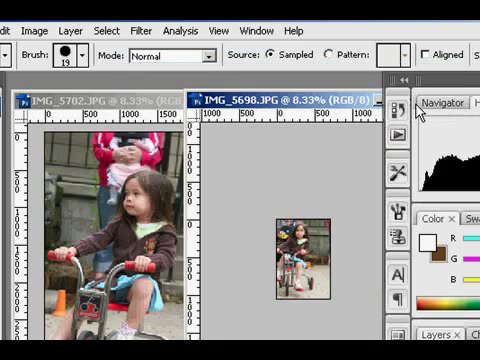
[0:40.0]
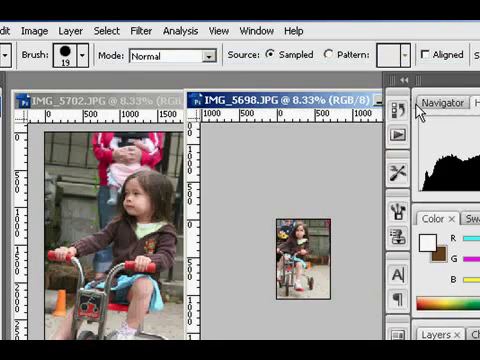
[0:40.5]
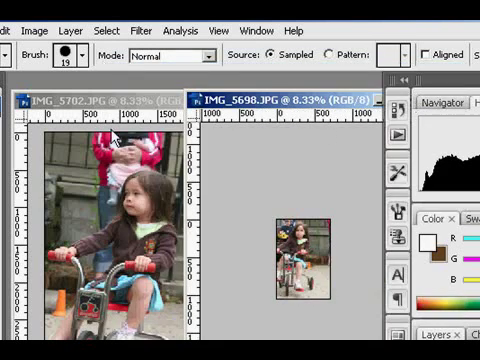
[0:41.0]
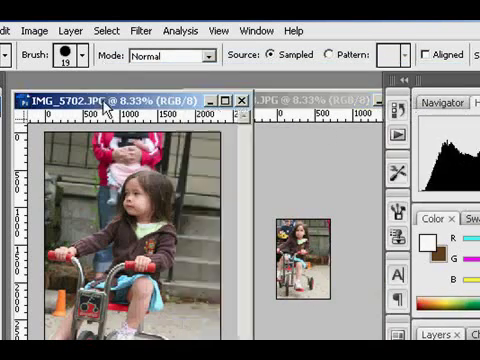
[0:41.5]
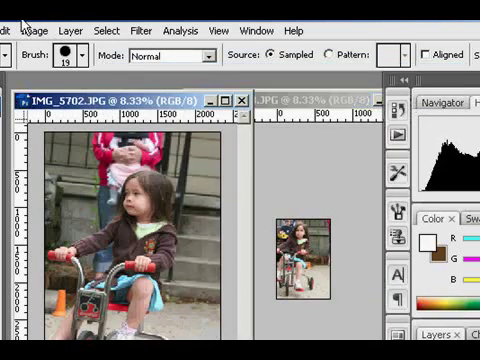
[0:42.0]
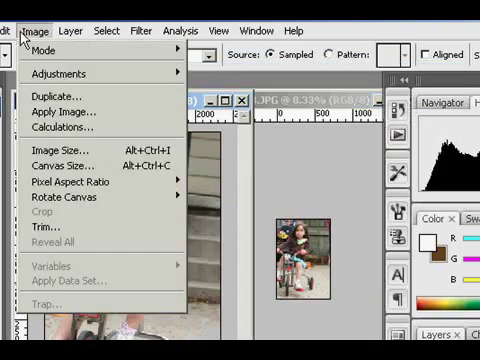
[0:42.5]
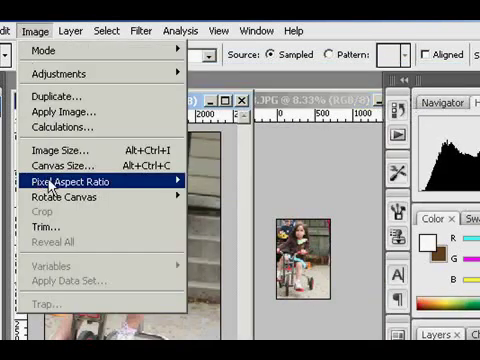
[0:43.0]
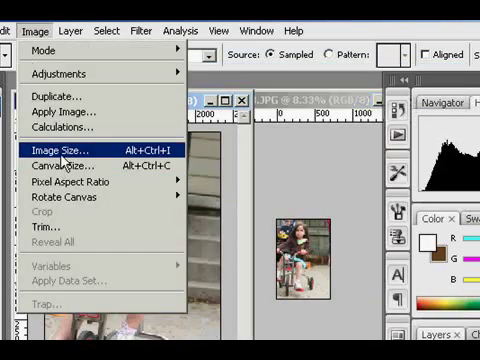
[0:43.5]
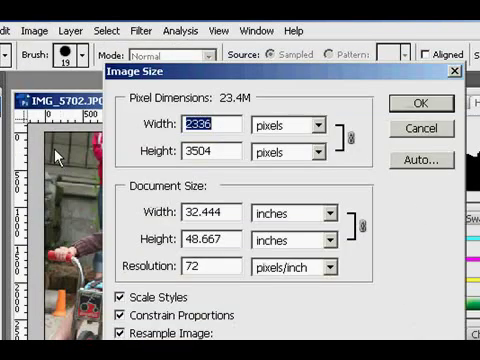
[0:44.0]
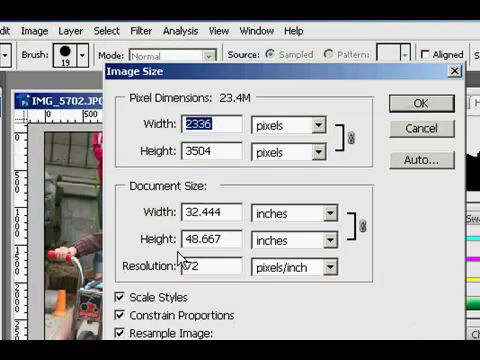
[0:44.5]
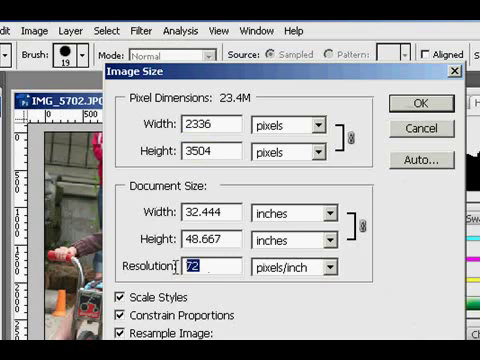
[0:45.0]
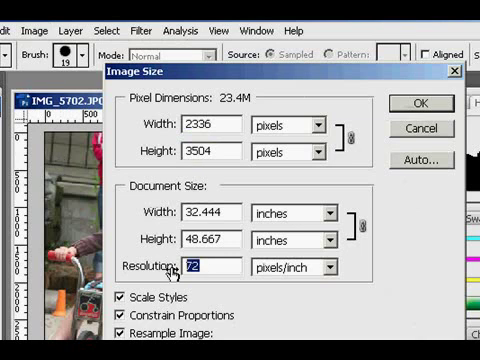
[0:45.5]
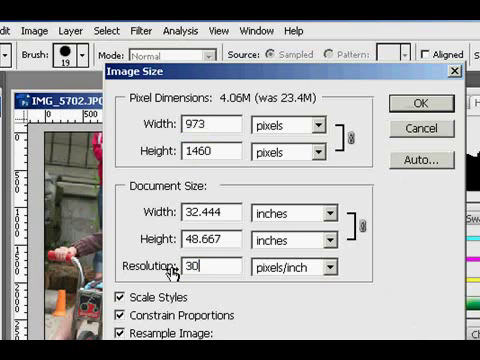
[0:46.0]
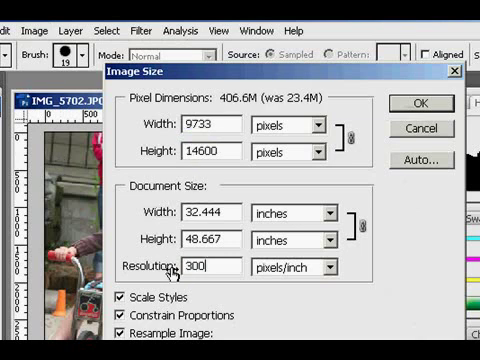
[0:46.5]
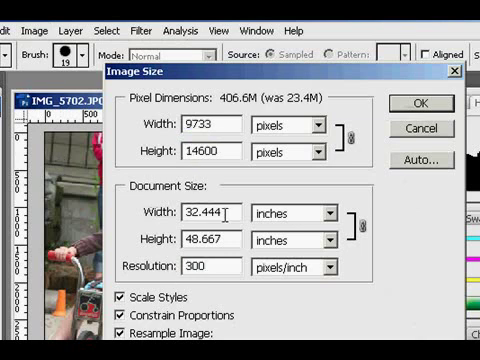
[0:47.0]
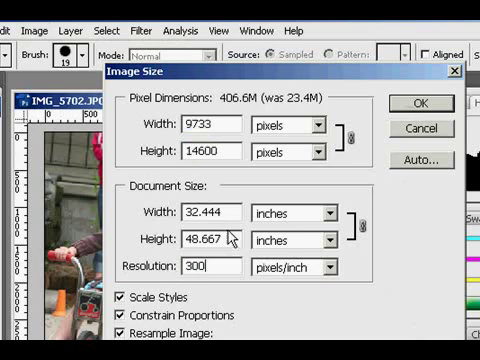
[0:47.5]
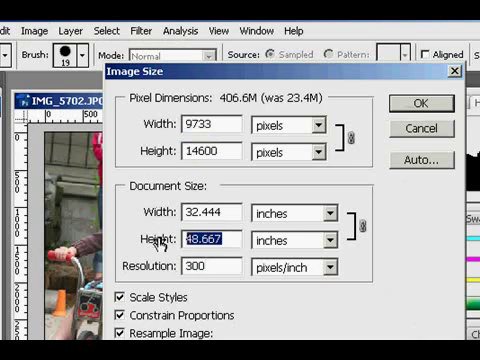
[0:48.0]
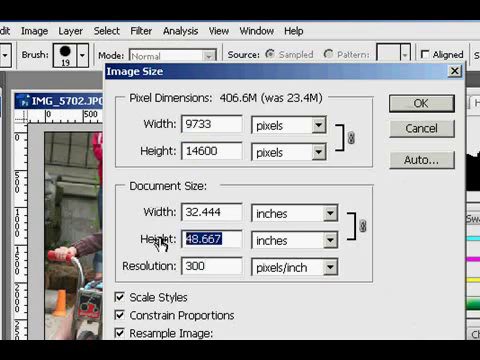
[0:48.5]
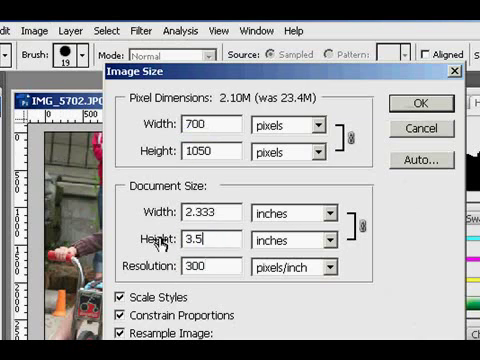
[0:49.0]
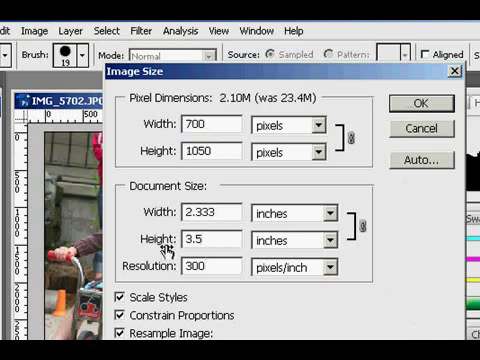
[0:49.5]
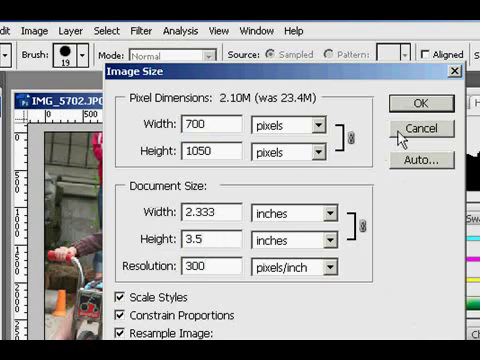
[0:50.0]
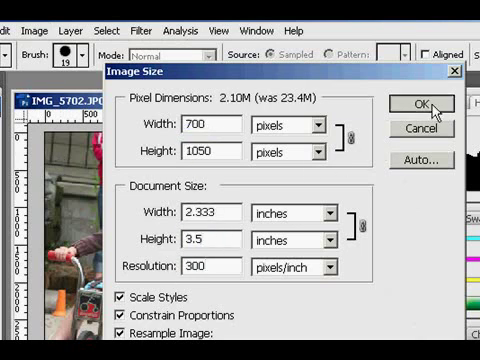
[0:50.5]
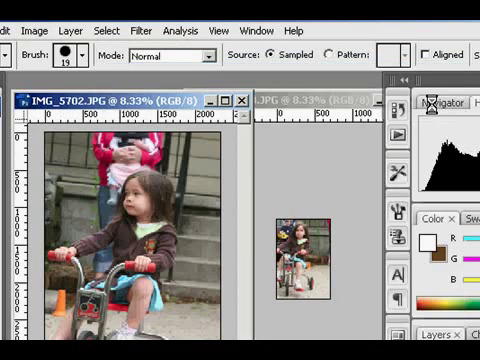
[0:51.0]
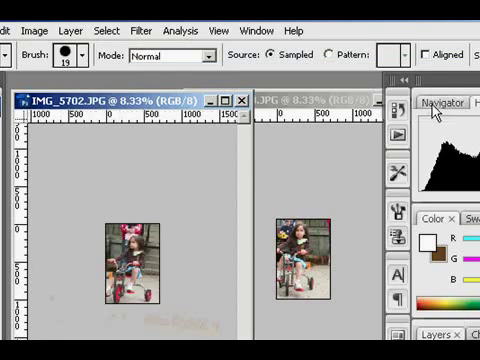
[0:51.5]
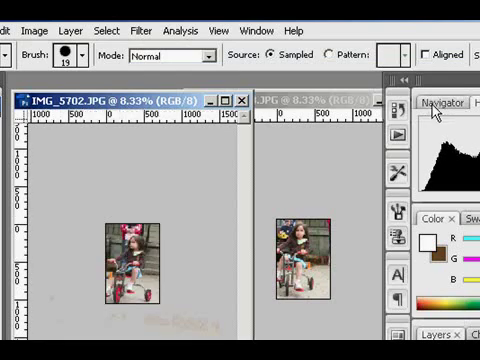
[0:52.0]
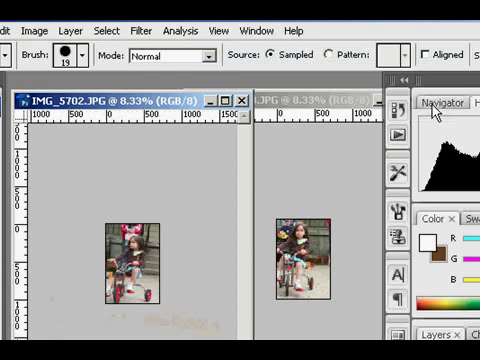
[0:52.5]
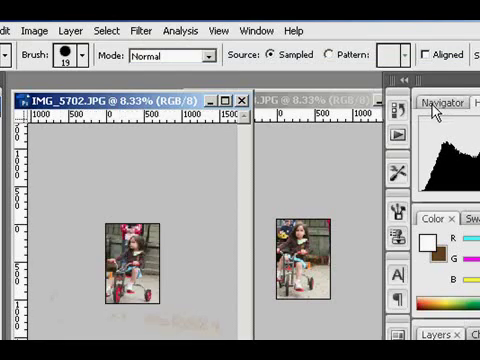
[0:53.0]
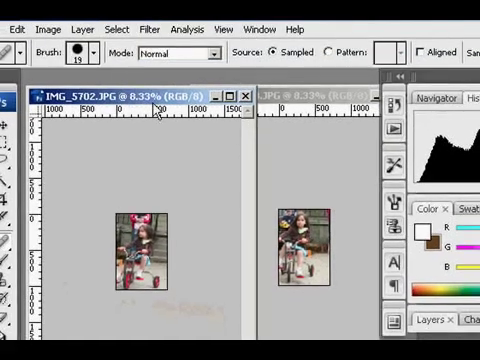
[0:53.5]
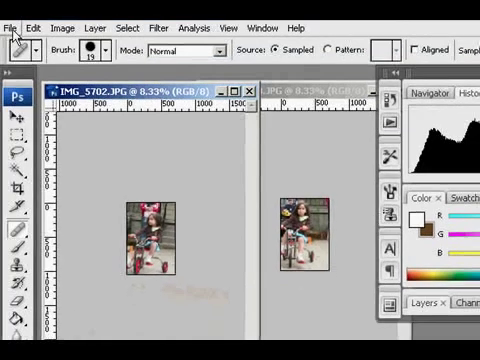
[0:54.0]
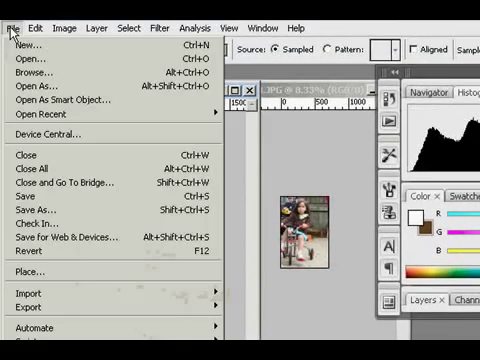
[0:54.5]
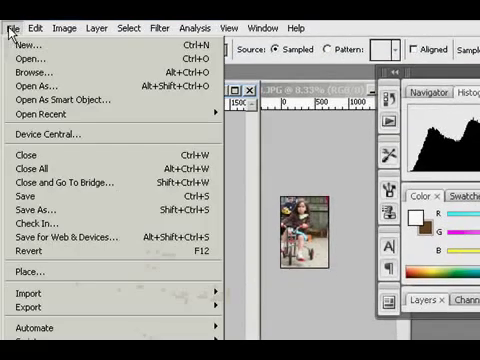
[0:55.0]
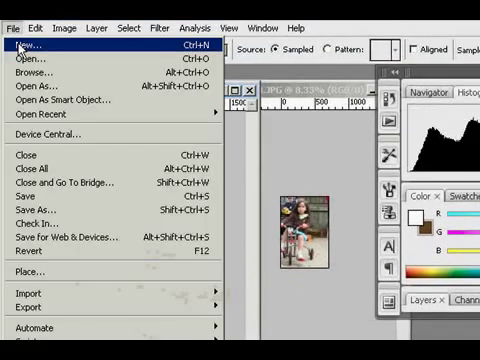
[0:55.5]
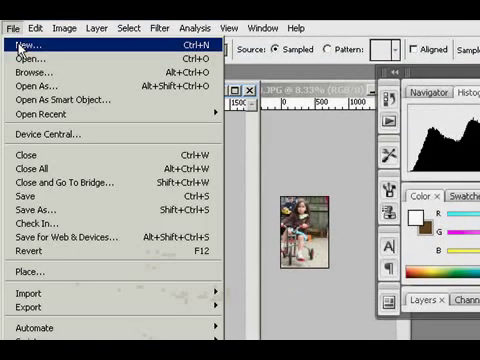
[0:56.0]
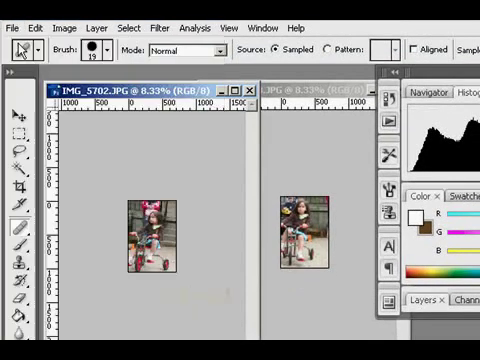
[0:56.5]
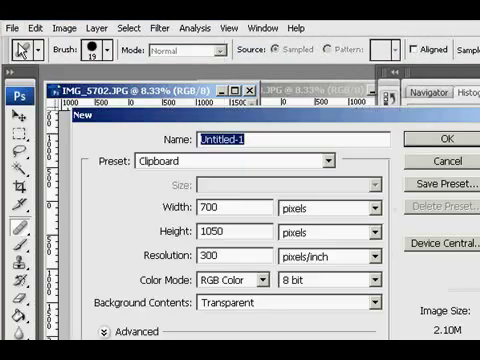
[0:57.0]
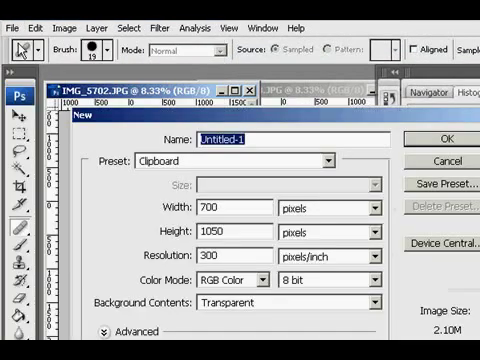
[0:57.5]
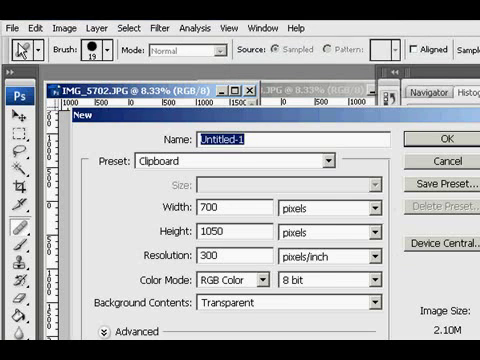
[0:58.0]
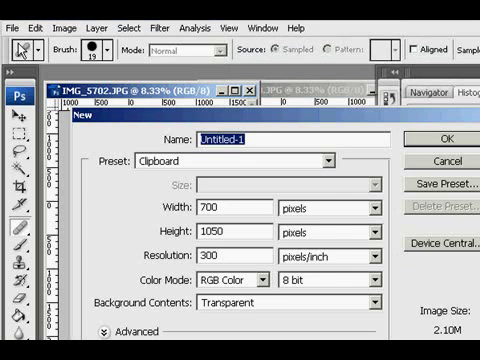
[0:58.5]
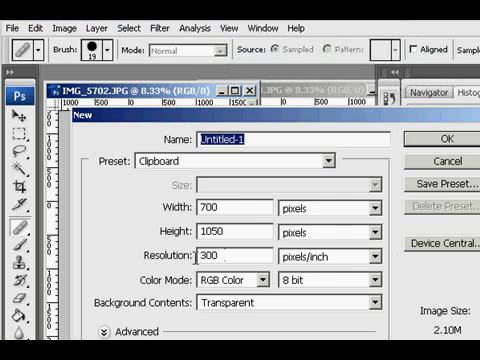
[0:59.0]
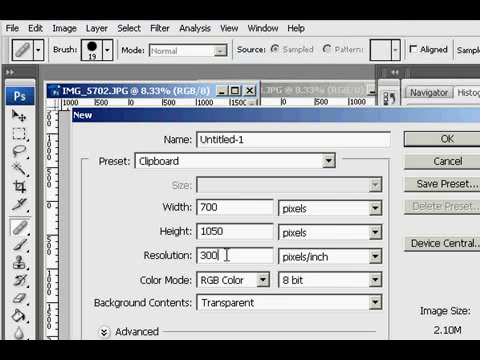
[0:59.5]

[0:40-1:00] The user is in the image menu, comes down to image size, and changes the resolution and width, apparently to match exactly the first image that was amended. They then go to the file menu in the top left-hand corner of the toolbar, click on new, come down to untitled as the name, and look at the two images. The edits are being applied consistently to both images.